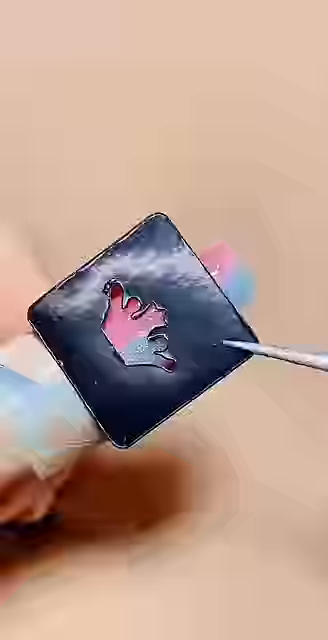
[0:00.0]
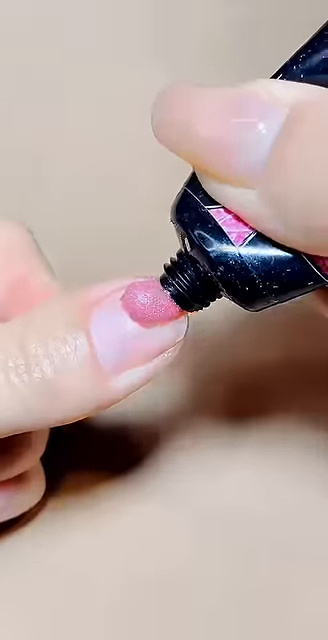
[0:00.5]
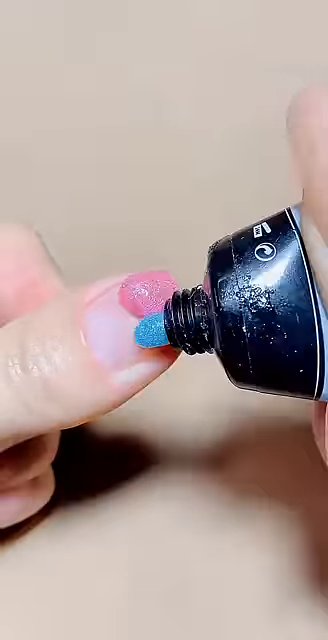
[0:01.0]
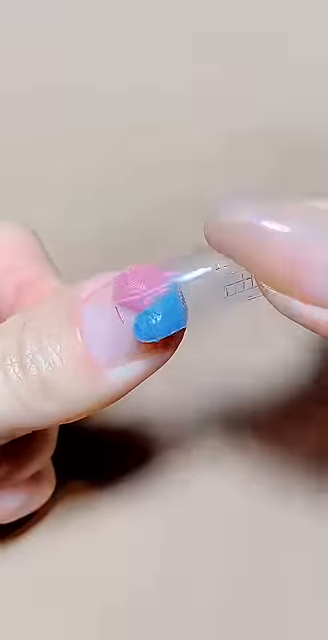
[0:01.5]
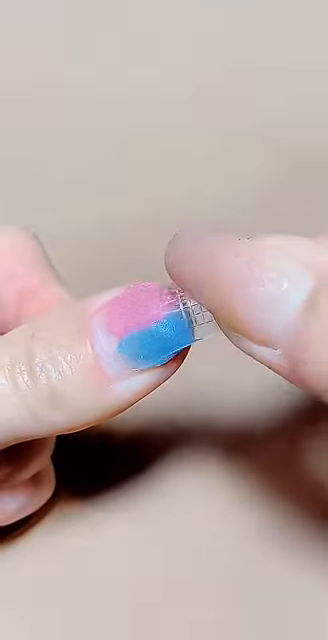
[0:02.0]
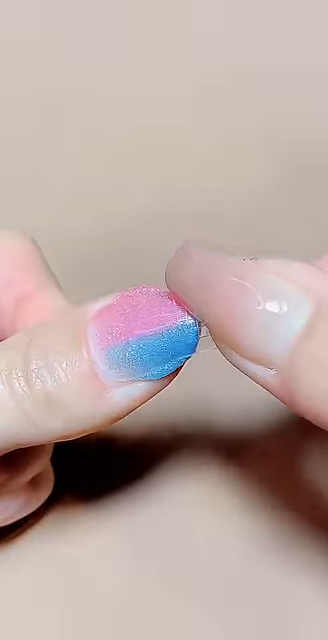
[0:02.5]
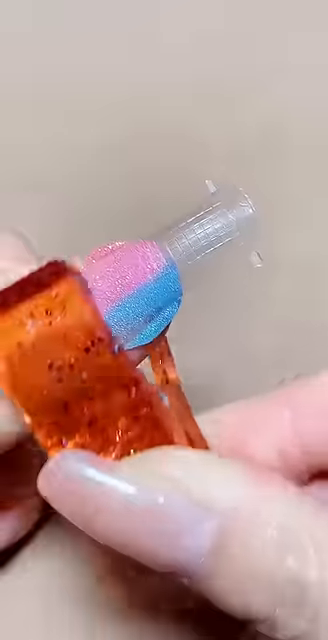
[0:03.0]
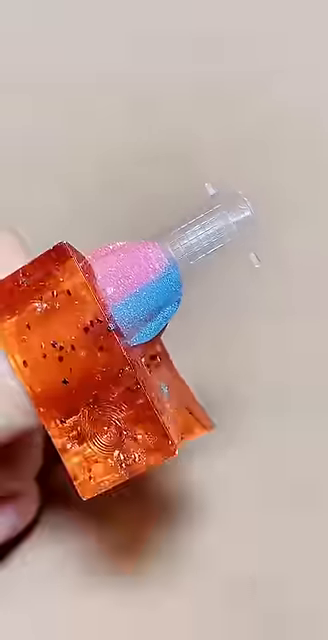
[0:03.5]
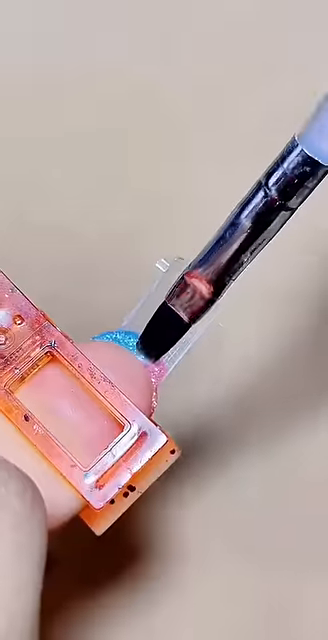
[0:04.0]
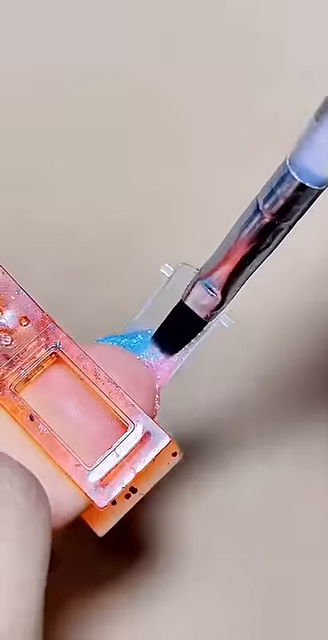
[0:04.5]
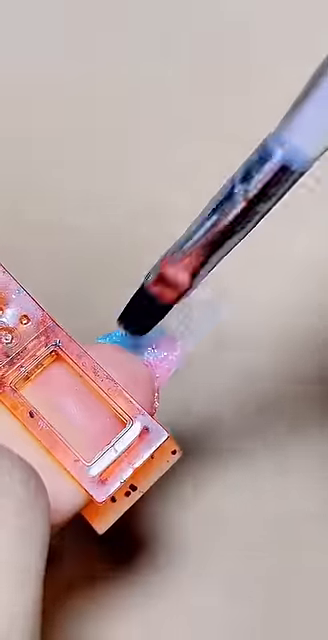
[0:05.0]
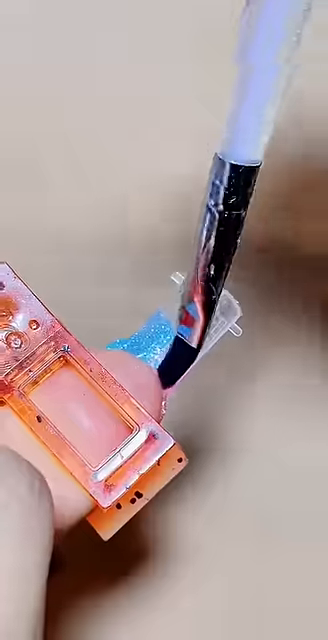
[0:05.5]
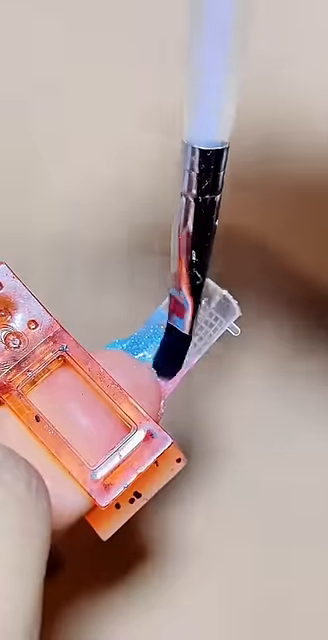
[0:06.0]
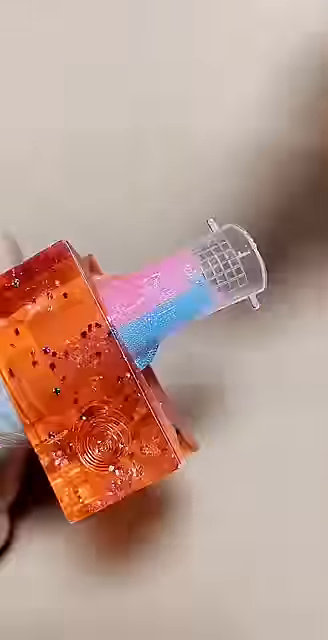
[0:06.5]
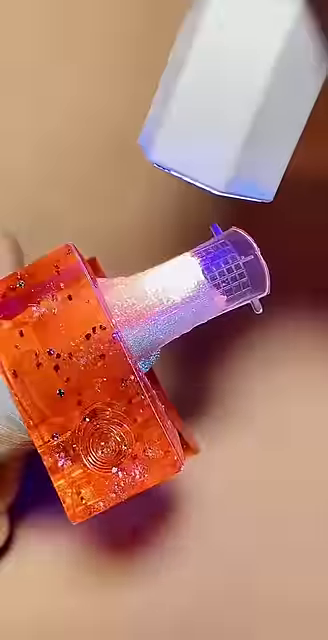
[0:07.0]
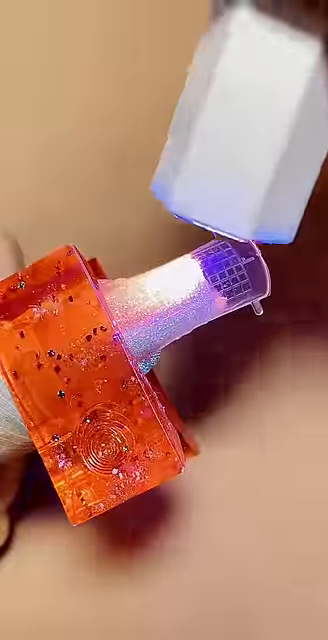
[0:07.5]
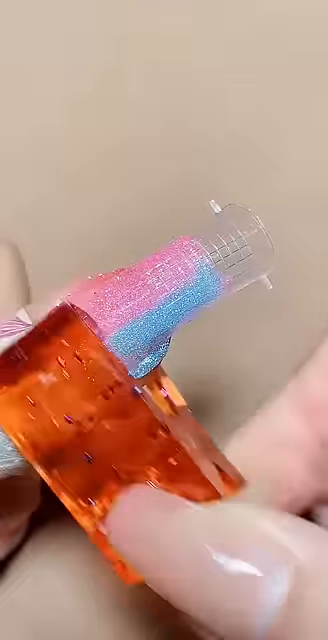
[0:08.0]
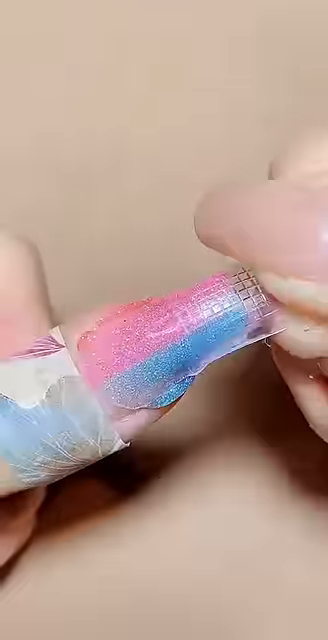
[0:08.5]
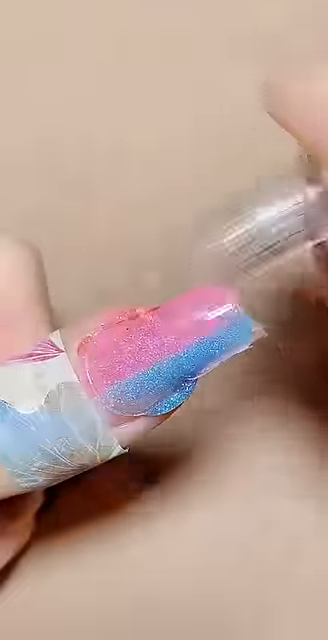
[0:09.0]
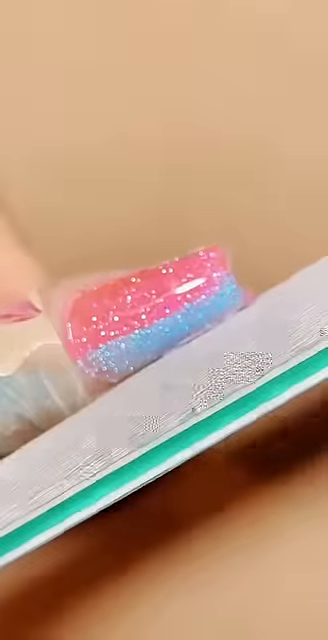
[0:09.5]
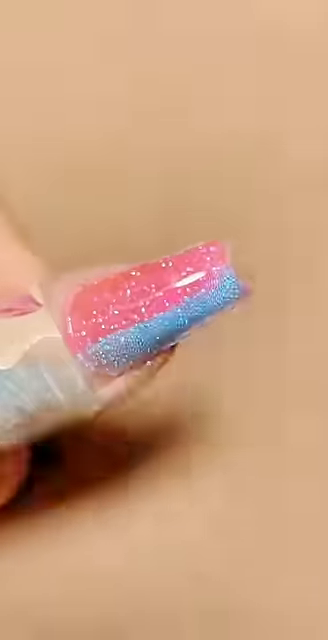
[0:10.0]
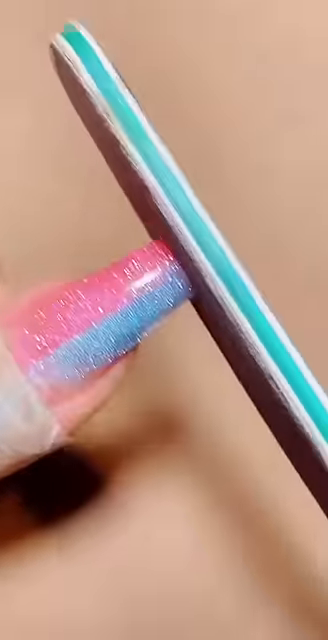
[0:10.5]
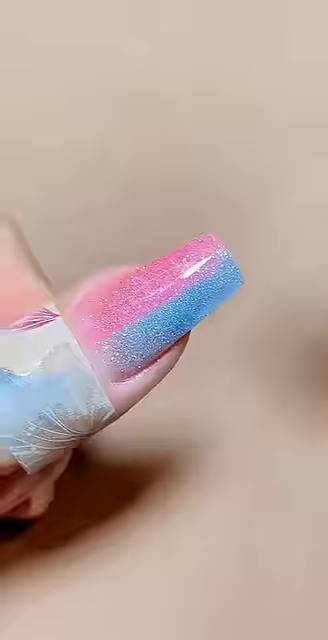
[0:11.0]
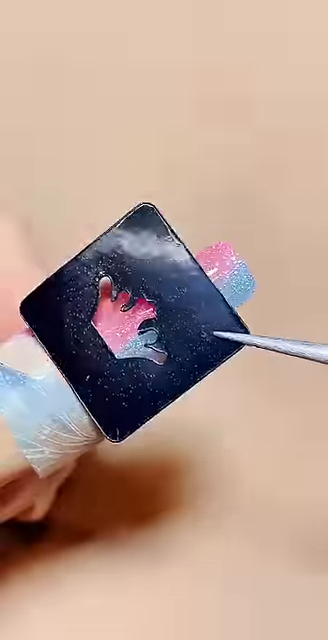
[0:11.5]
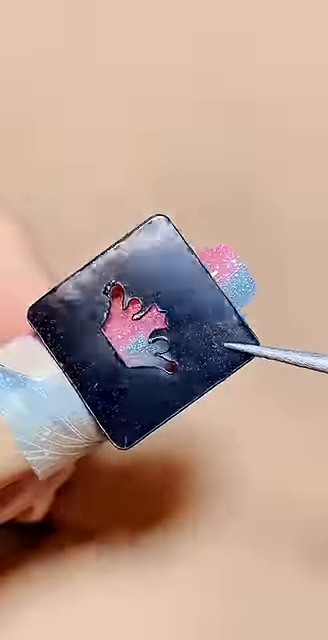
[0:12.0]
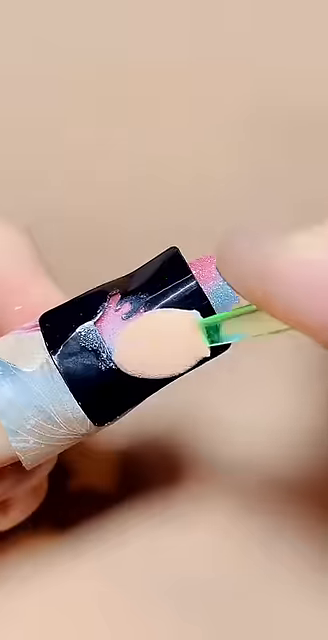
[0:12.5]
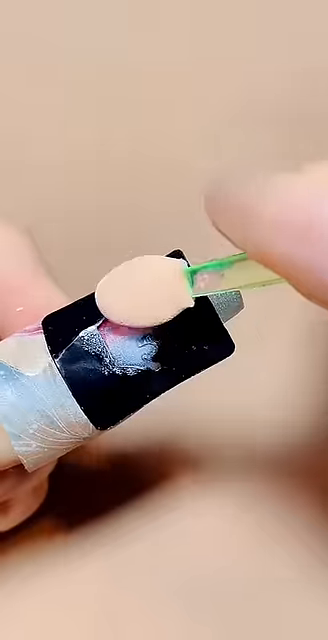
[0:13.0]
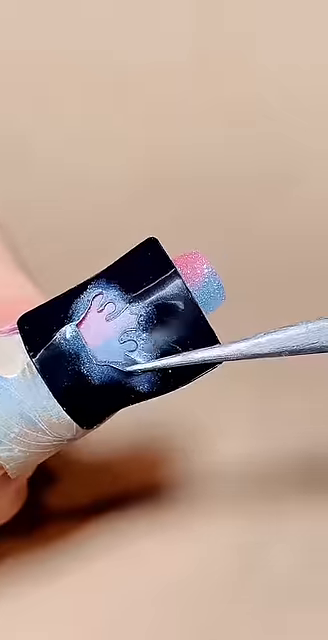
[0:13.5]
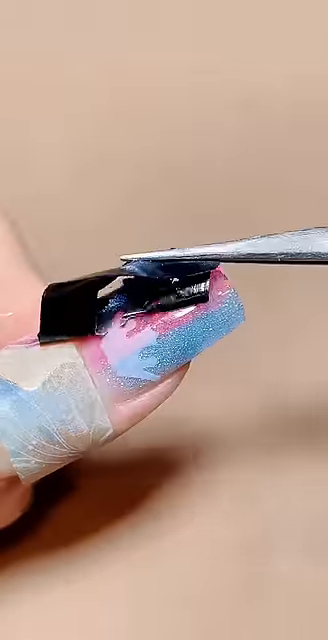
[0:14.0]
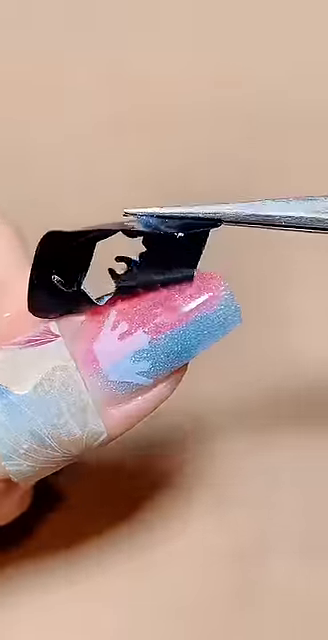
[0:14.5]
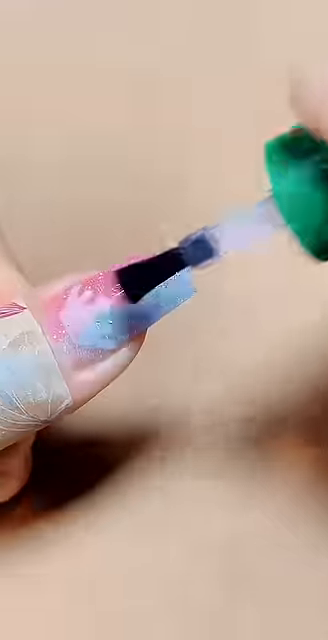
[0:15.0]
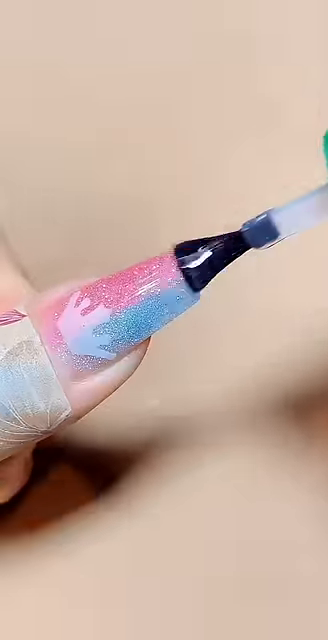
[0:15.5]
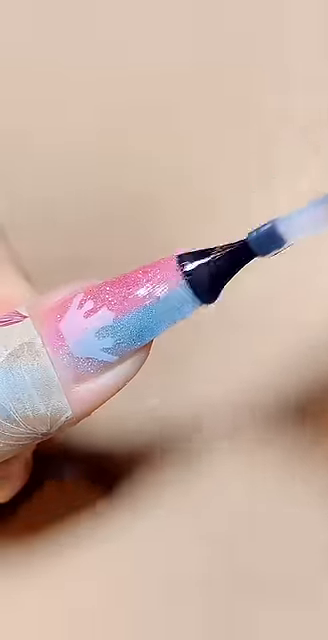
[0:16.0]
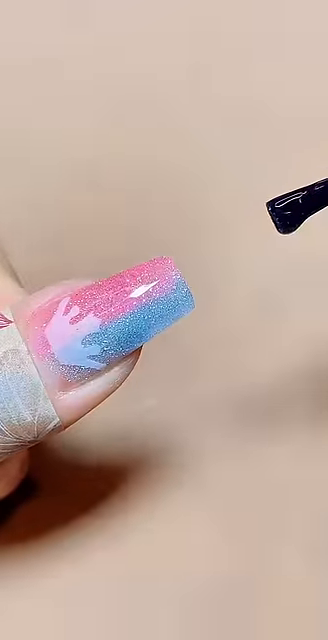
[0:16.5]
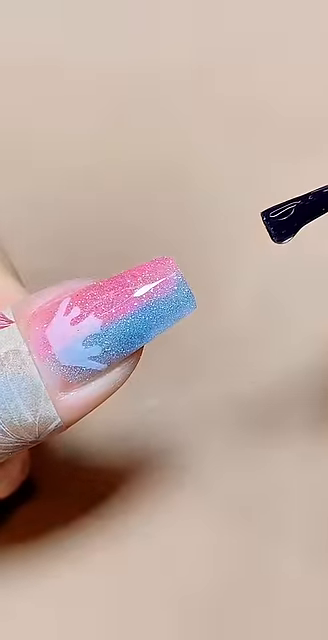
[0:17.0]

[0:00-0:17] A person colors their nails with pink and blue polish, then puts on some kind of plastic, and after the plastic continues painting the nails. Next they add a design that looks like a crown, followed by a clear coat over the polish, and they file the nail down to shape it. The finished product is a pink and blue nail polish with what looks kind of like a white crown on top. The video then cuts back to the person applying the nail polish. They put on a clip and use it to hold down a clear plastic placed on top of the nail, apparently to create the crown pattern and also to paint the bottom of the nail. They also put on what looks like a black sticker with the crown cut out, then paint over the nails they had already painted earlier.